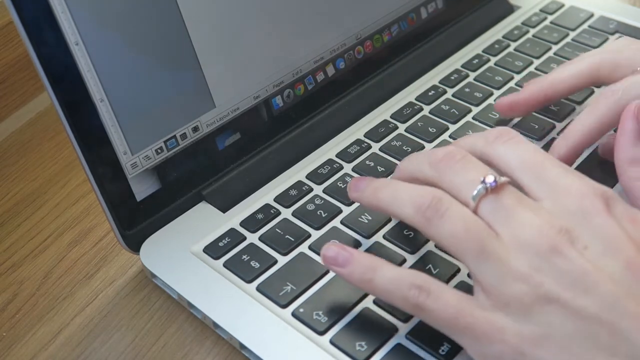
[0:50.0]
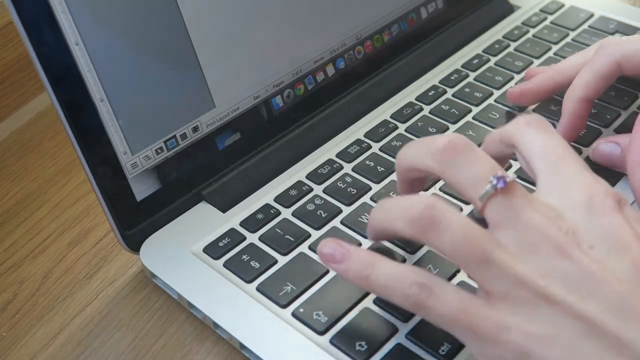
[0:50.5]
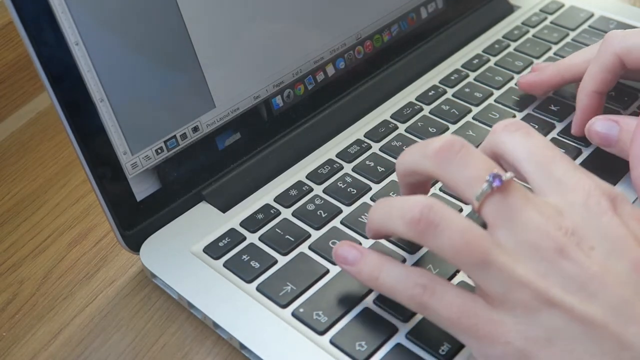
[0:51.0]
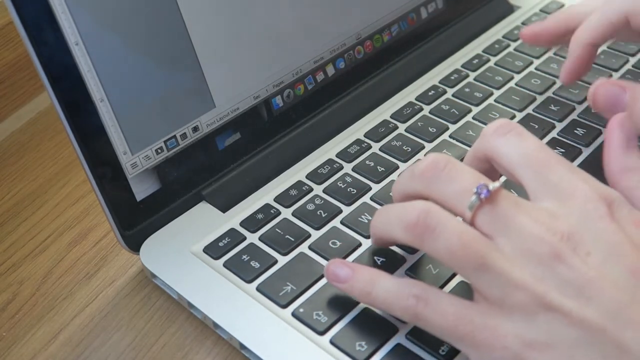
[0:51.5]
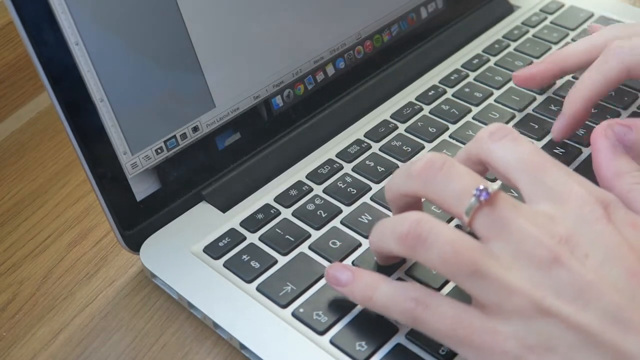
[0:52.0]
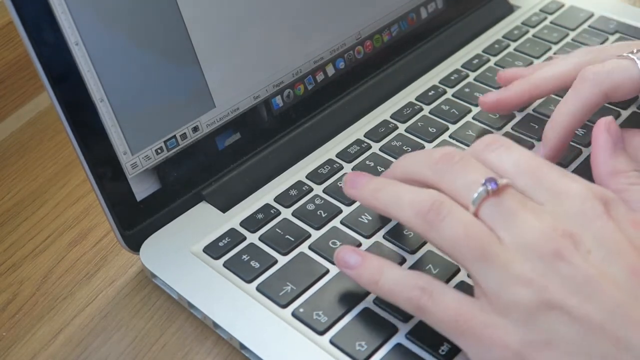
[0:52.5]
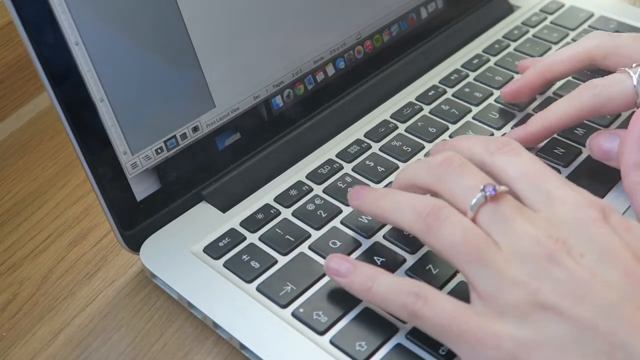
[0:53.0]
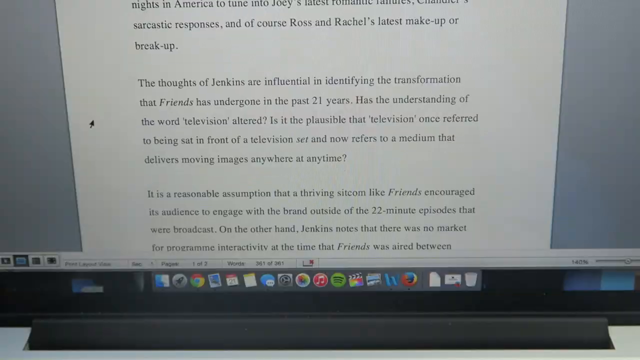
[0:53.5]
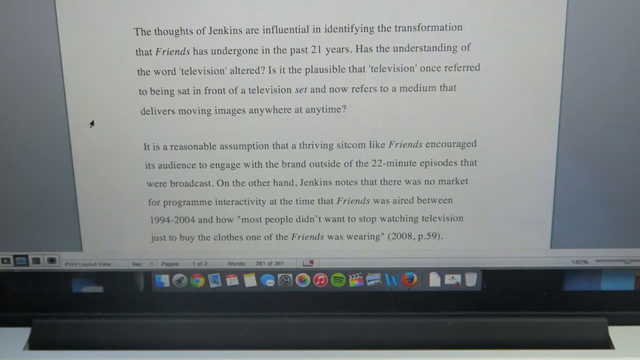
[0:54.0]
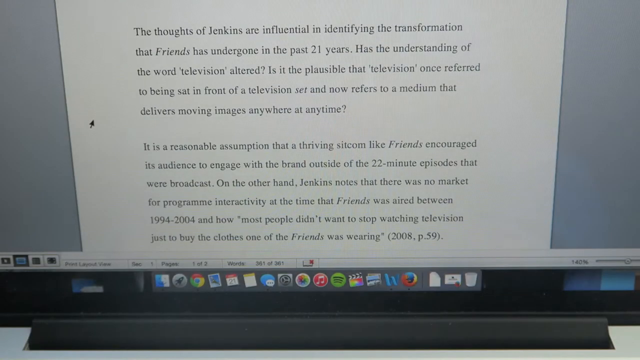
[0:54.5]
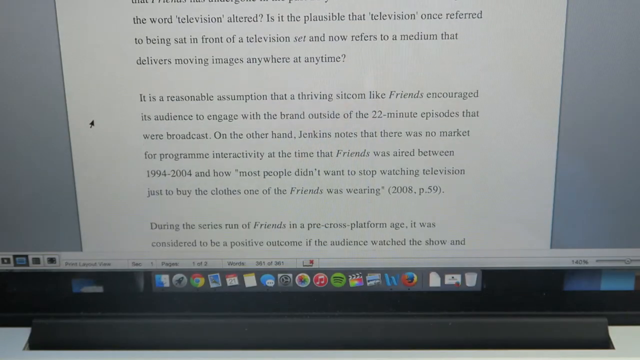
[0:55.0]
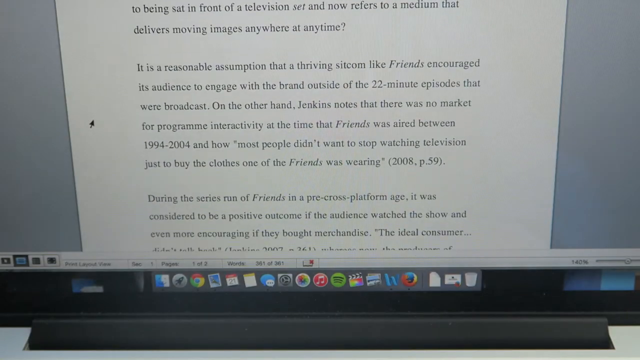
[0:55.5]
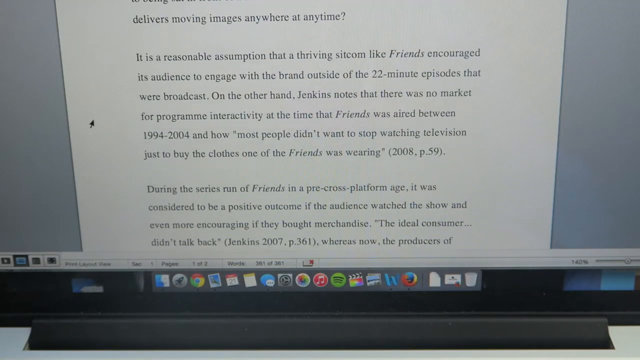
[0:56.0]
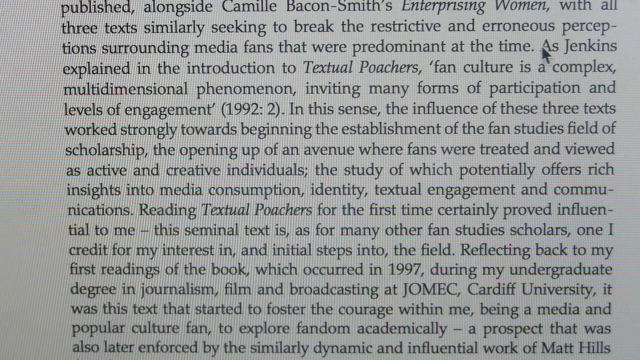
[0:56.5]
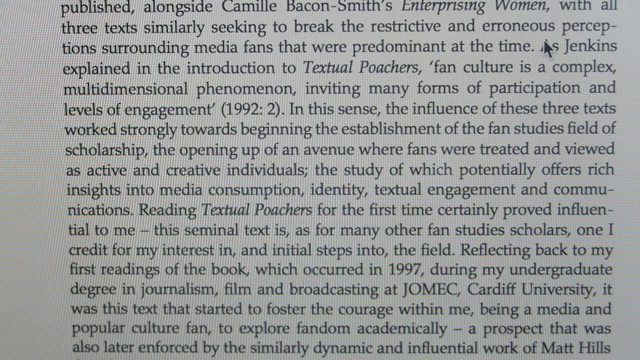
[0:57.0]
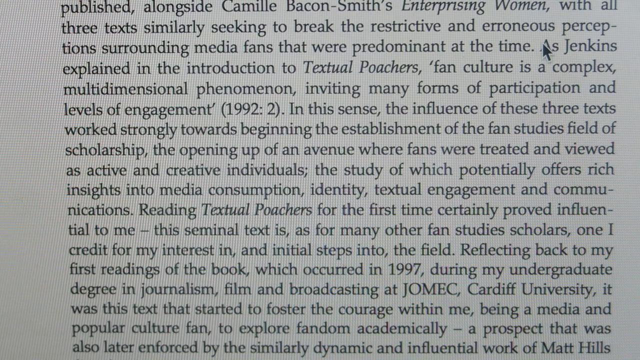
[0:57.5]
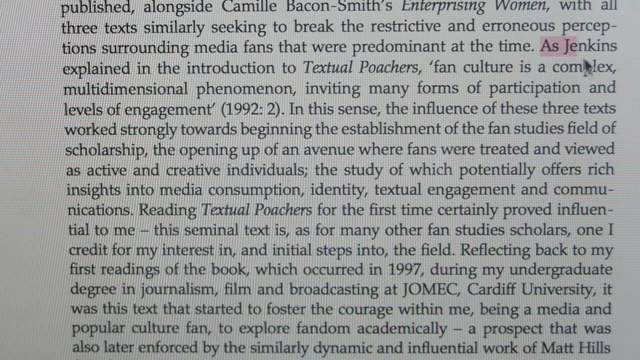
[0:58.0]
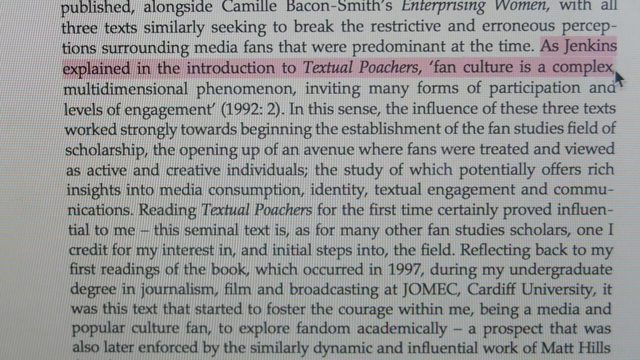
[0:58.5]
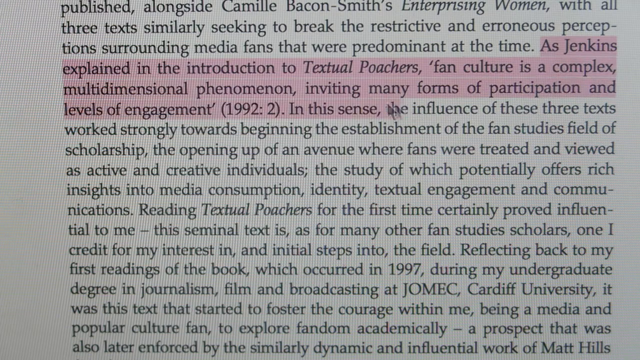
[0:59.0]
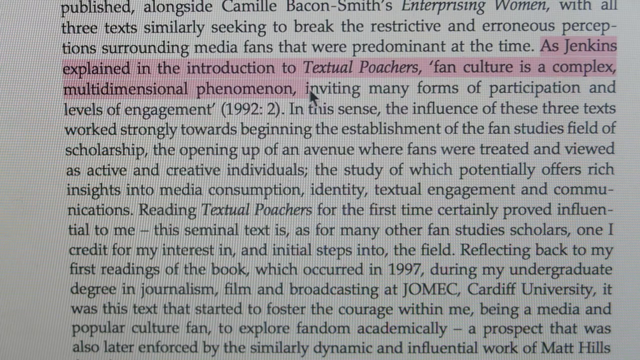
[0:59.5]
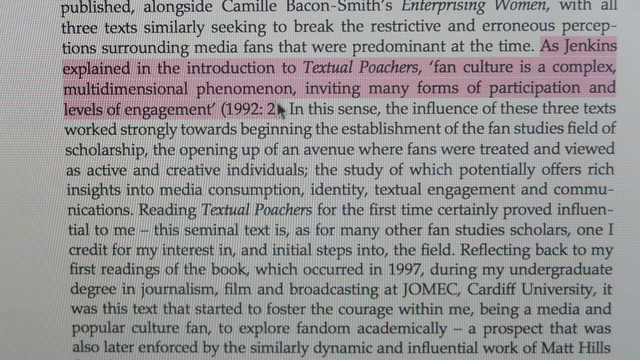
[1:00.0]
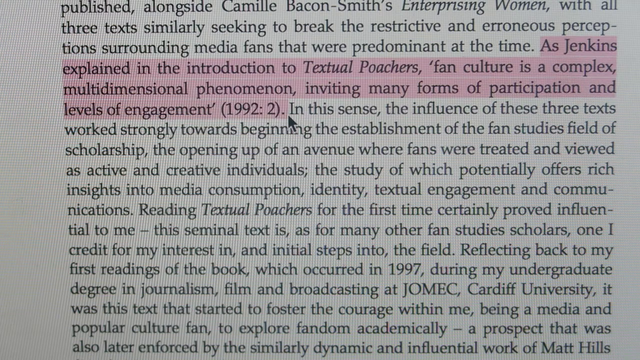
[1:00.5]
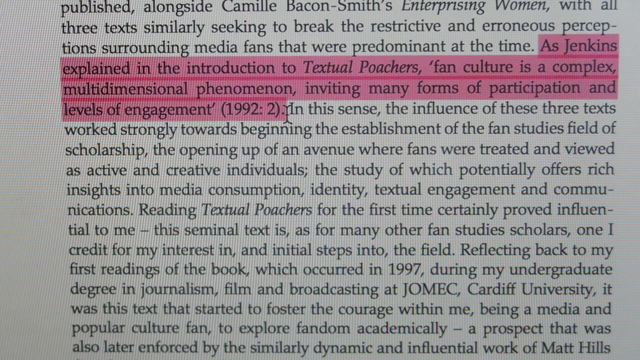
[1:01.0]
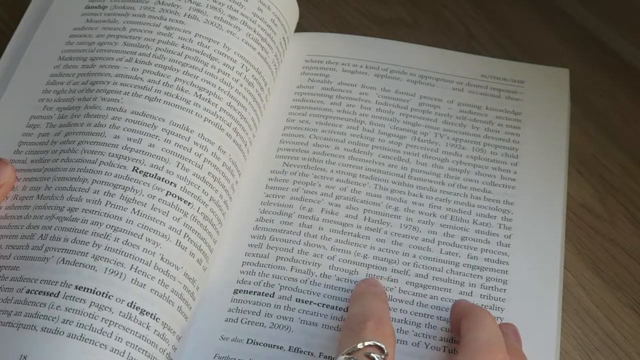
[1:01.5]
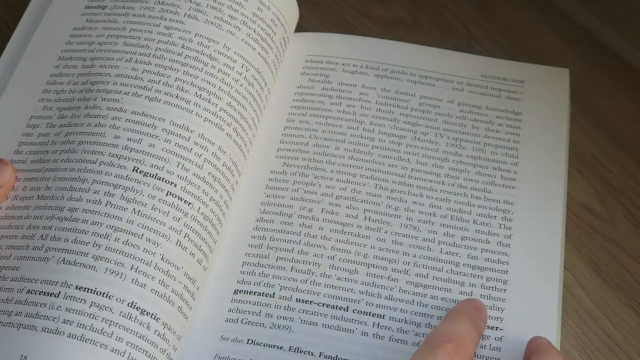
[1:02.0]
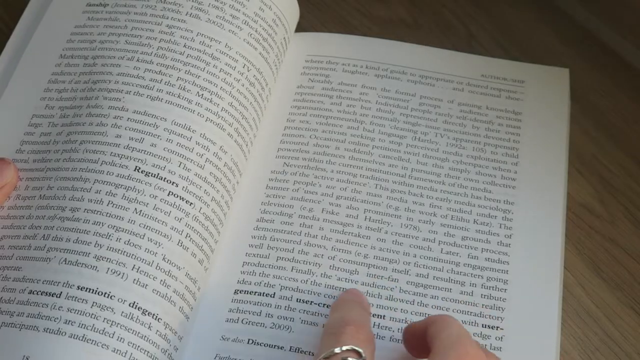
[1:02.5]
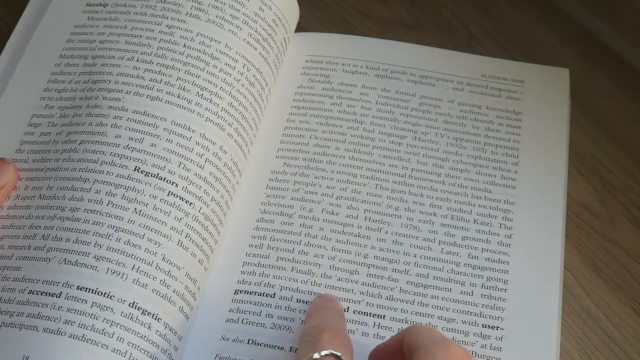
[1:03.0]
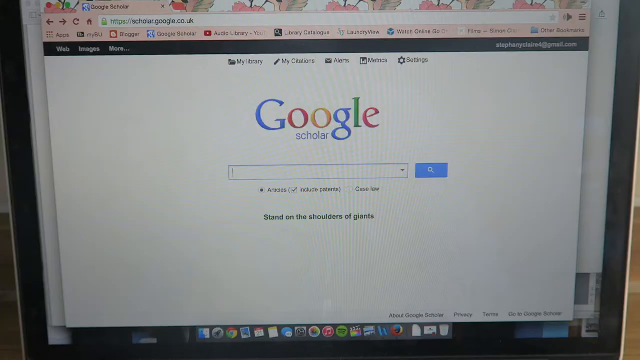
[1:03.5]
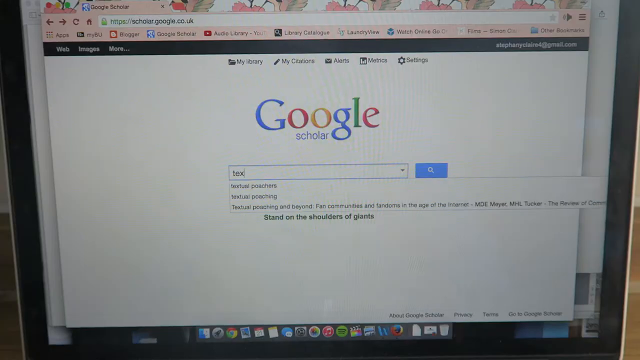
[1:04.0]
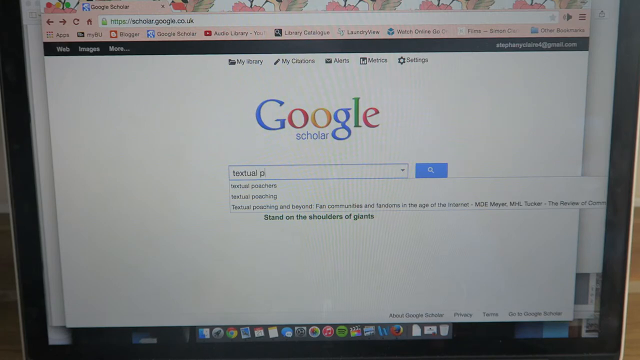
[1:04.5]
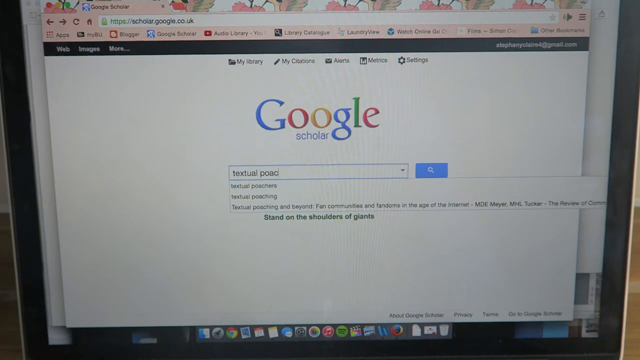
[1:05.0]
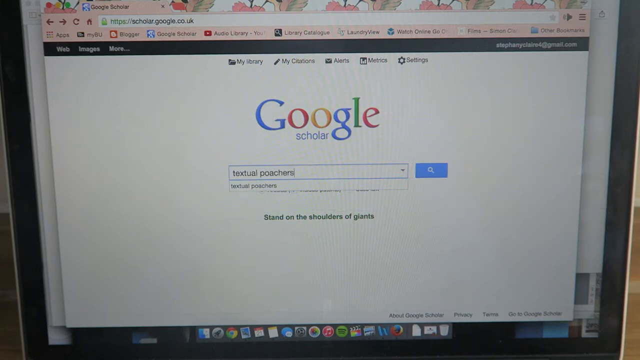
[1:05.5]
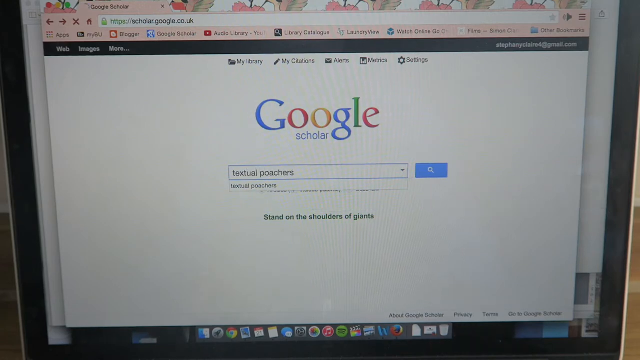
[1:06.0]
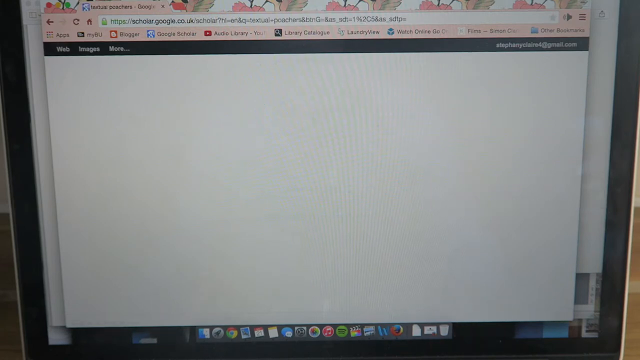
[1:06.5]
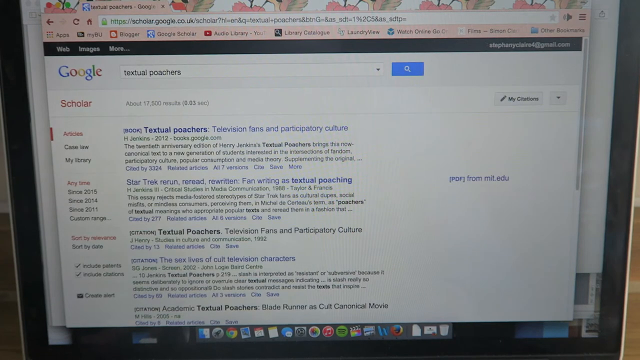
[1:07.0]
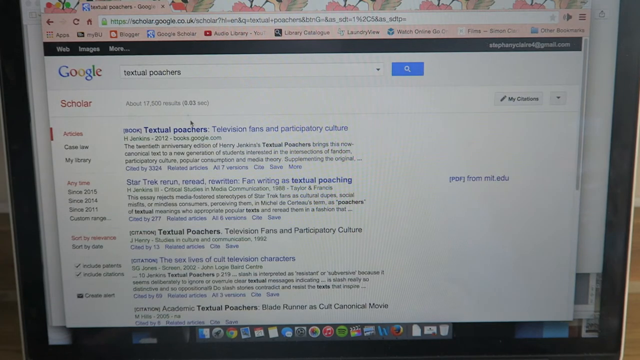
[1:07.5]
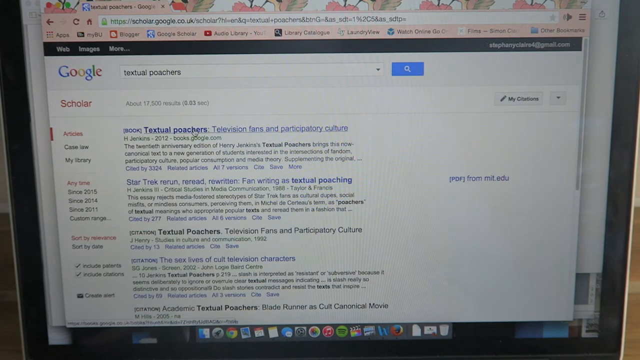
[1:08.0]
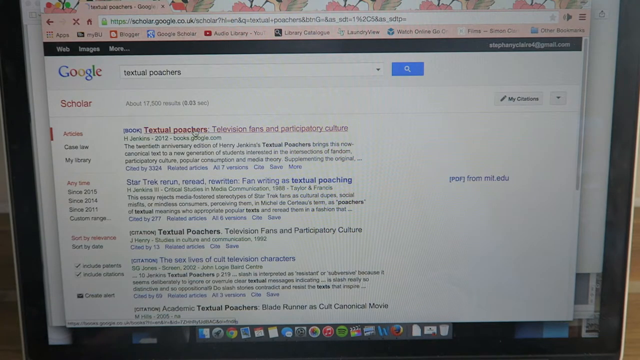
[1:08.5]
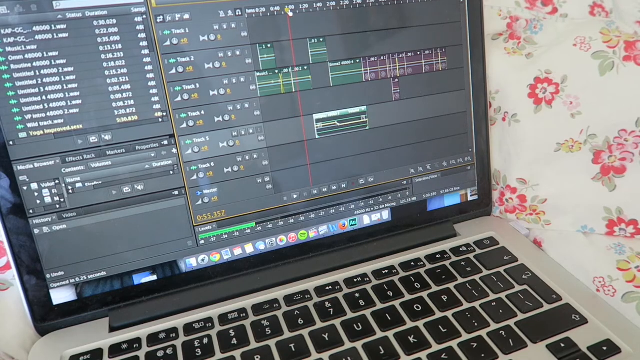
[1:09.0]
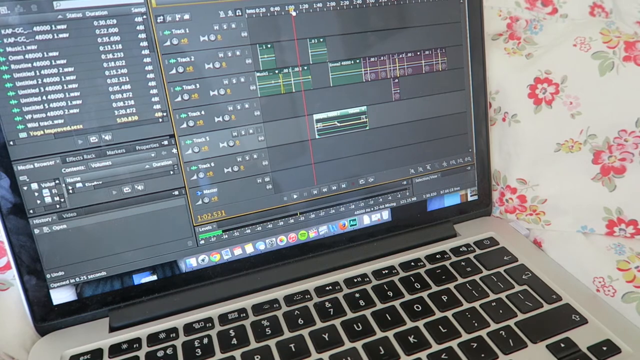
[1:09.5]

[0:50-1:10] The hands continue typing on the laptop. The view then switches to the laptop screen, where a regular document like a written paper, apparently double-spaced, scrolls down. Next is what looks like a single-spaced article, in which three or four lines are highlighted in pink with the cursor, first in light pink and then in a bright pink that is underlined. An open book appears next, with a finger on the right seemingly following along the lower part of the right page. Then a Google search comes up with the multicolored Google logo, "textual poachers" typed in, the search results, and the cursor moving a little. Finally, another view of the laptop shows some kind of program with a mostly black background, white text, and green and burgundy highlighted areas on the side; it is unclear, but it kind of has the look of a music-producing program.